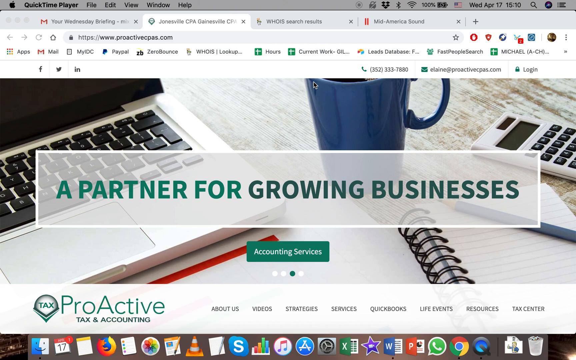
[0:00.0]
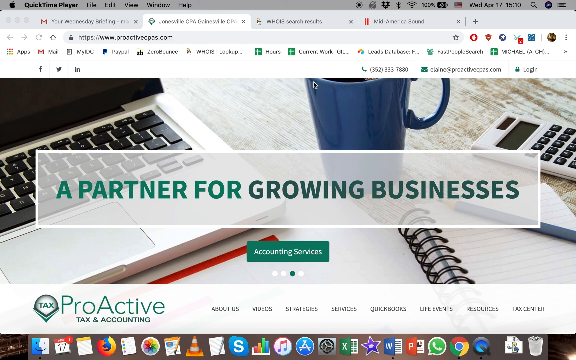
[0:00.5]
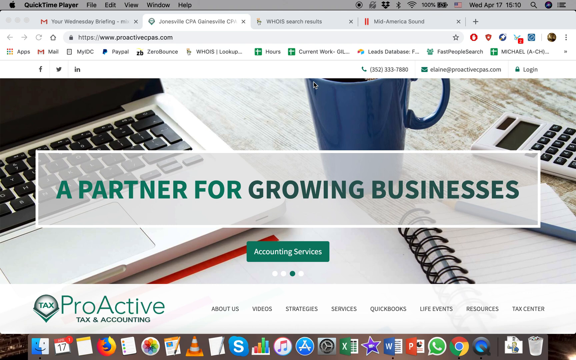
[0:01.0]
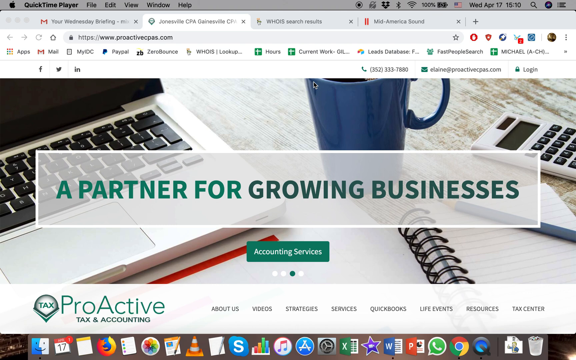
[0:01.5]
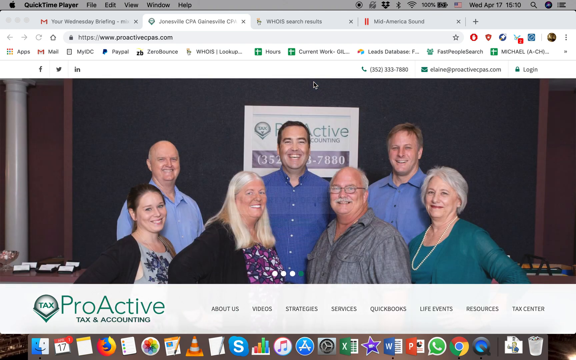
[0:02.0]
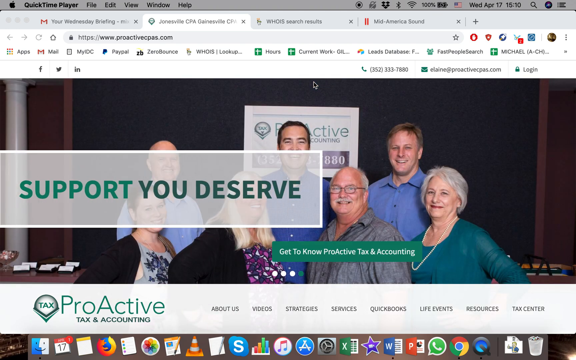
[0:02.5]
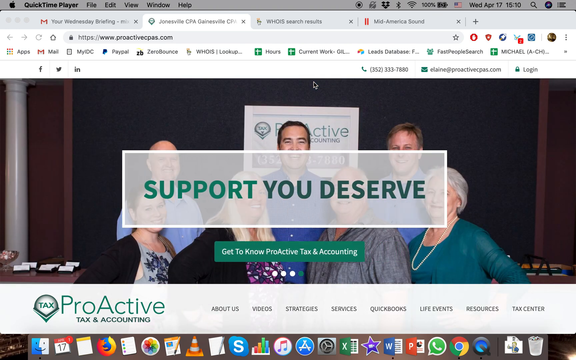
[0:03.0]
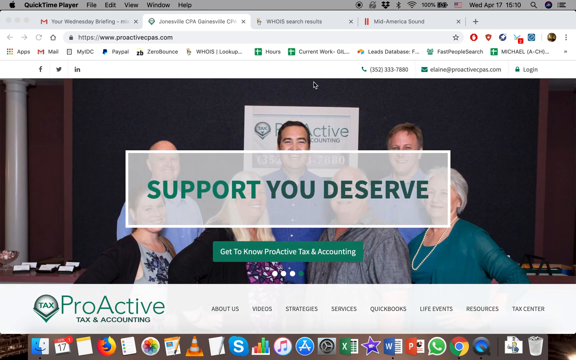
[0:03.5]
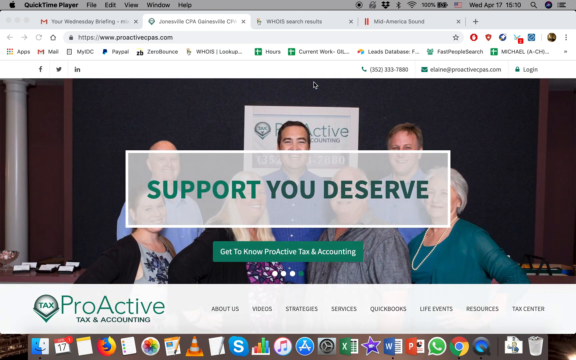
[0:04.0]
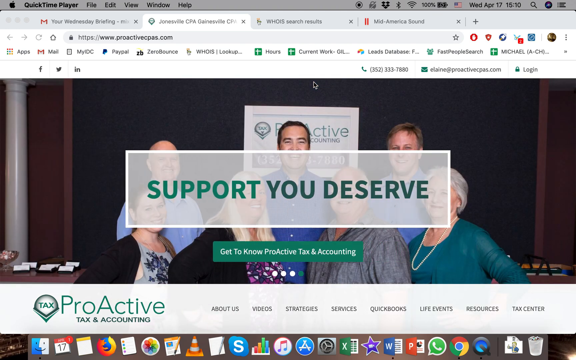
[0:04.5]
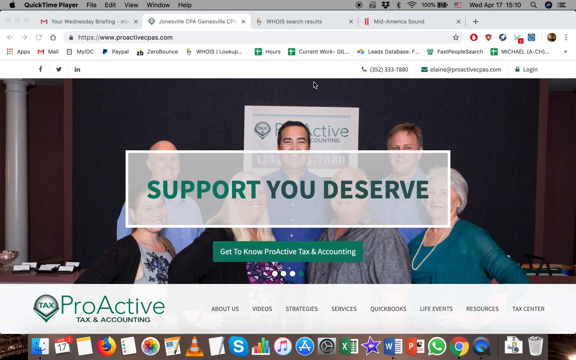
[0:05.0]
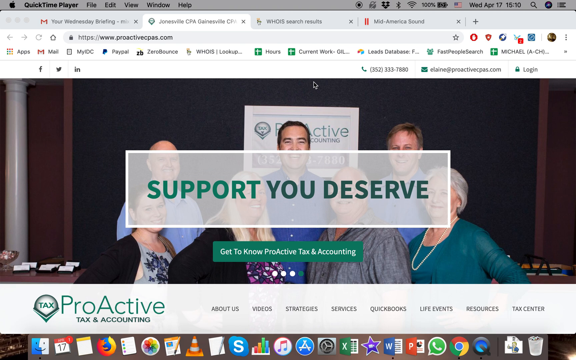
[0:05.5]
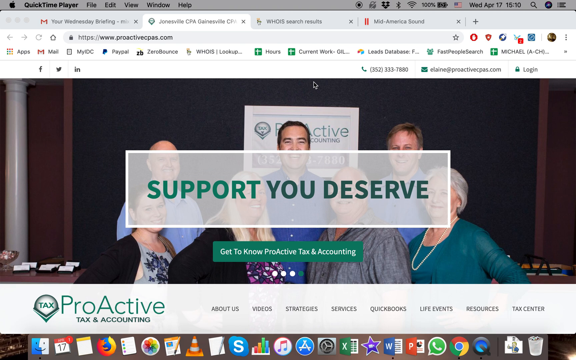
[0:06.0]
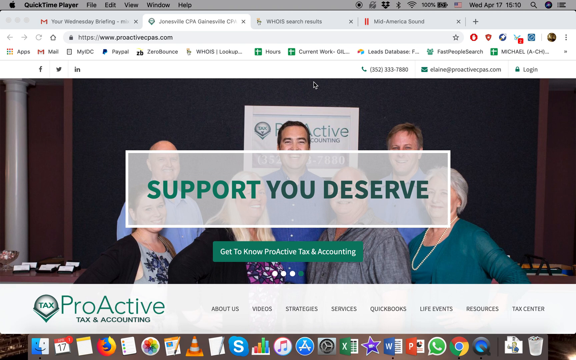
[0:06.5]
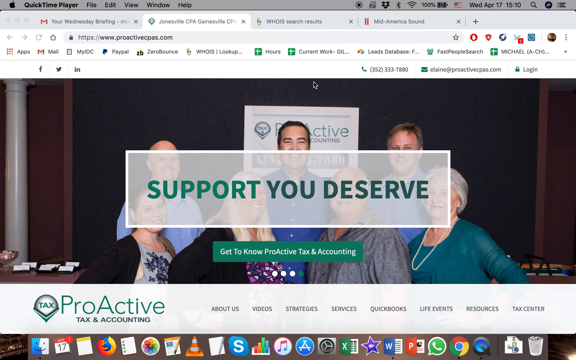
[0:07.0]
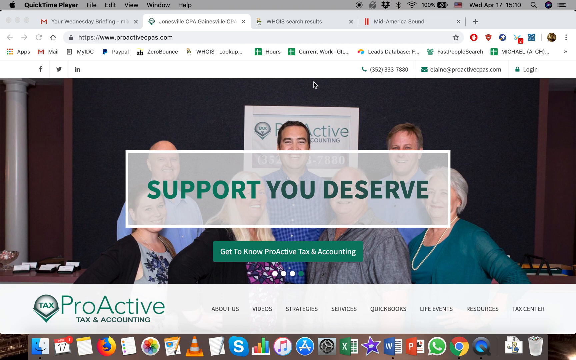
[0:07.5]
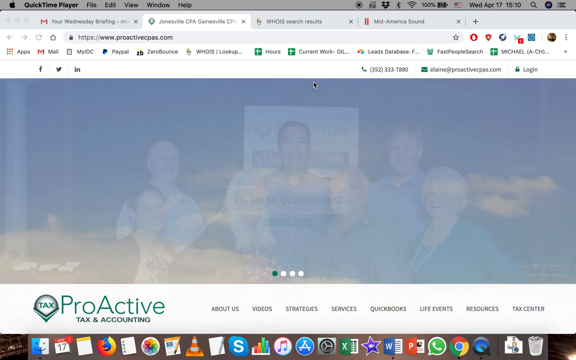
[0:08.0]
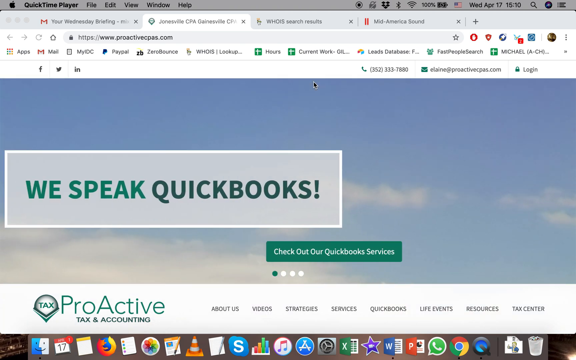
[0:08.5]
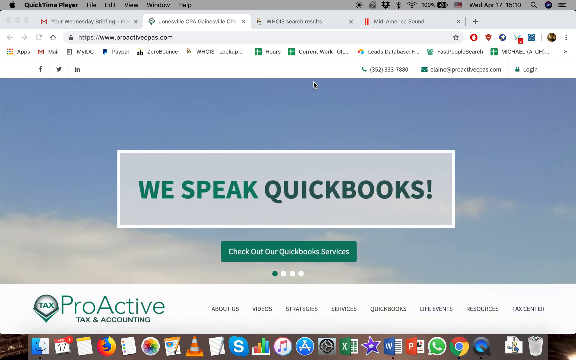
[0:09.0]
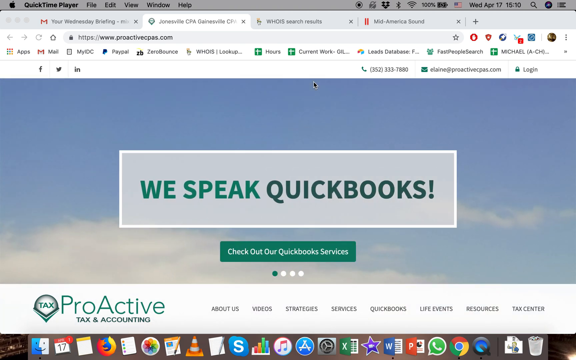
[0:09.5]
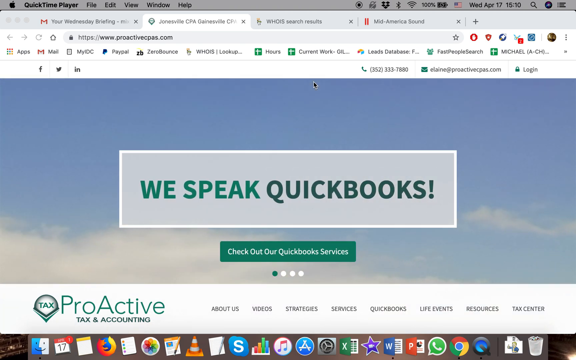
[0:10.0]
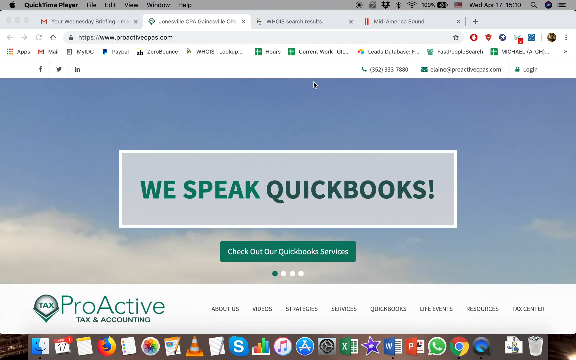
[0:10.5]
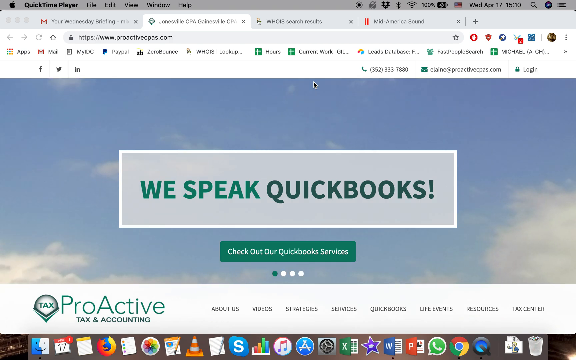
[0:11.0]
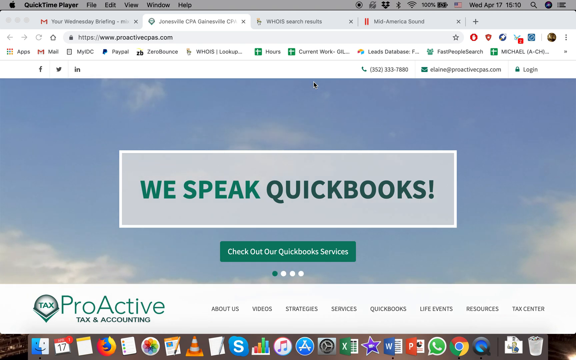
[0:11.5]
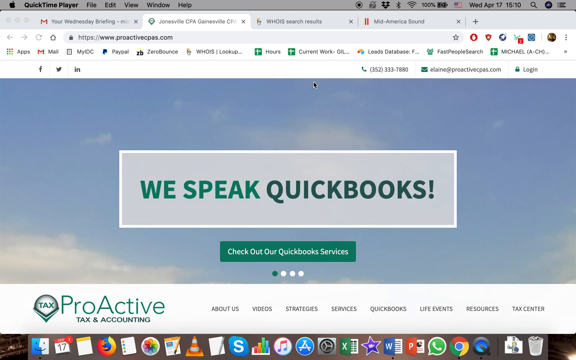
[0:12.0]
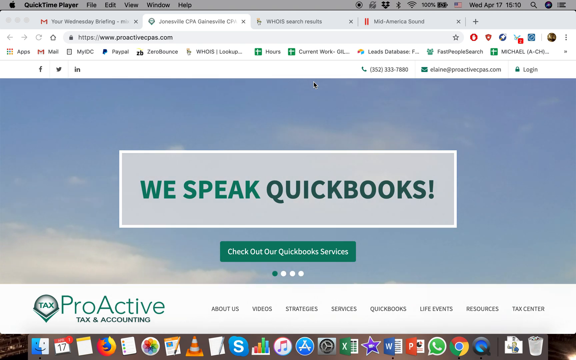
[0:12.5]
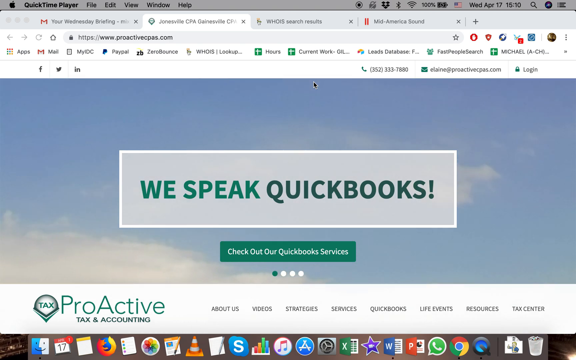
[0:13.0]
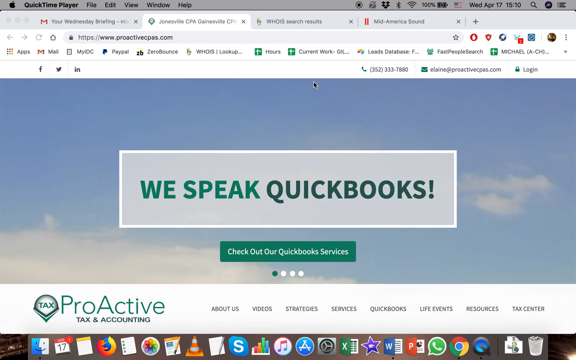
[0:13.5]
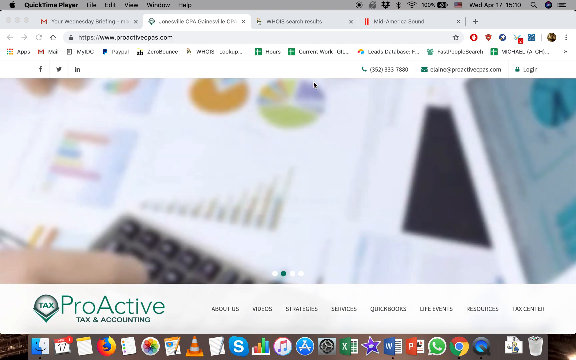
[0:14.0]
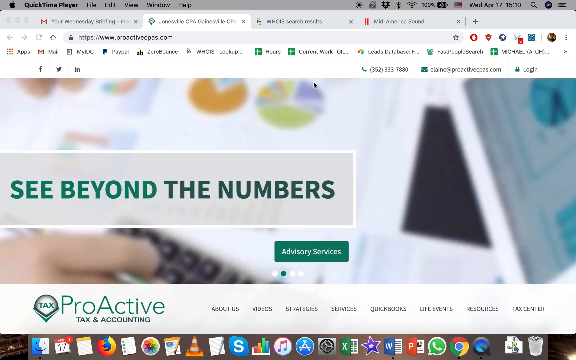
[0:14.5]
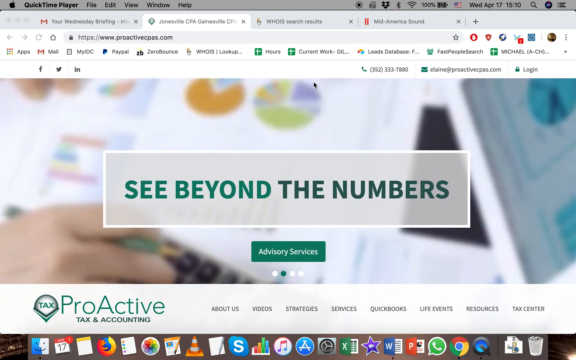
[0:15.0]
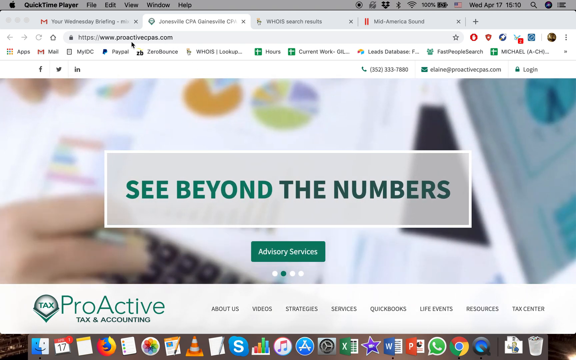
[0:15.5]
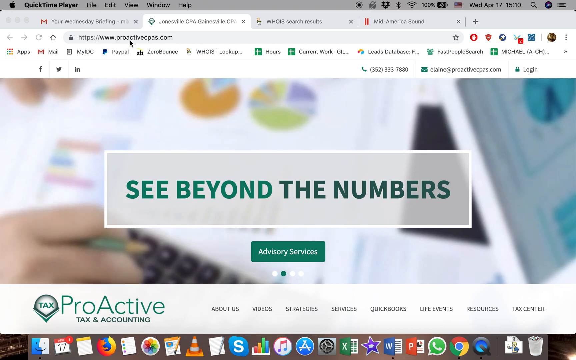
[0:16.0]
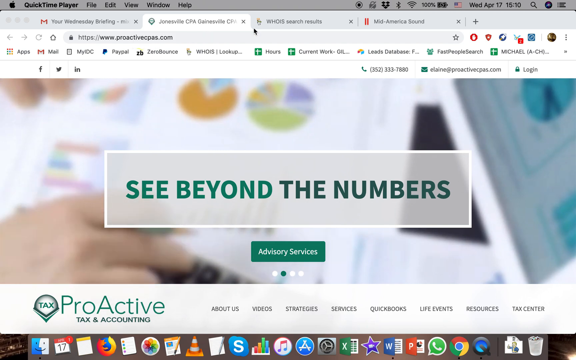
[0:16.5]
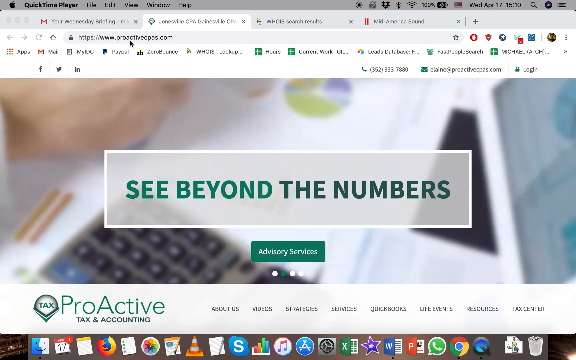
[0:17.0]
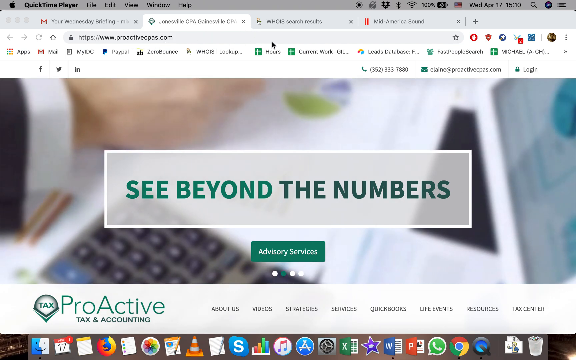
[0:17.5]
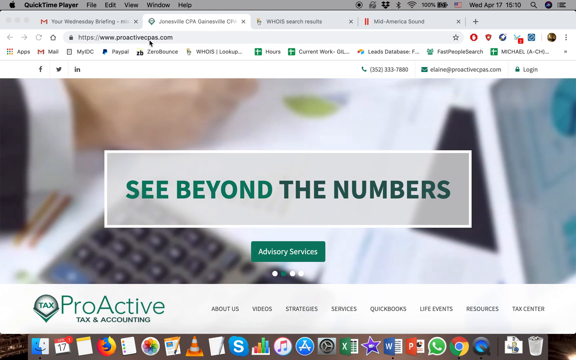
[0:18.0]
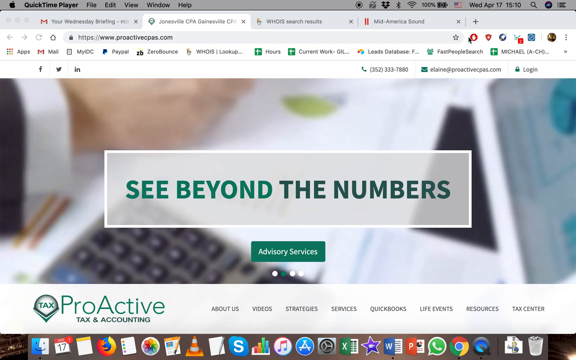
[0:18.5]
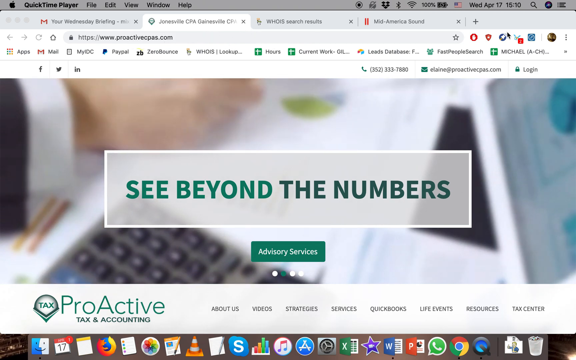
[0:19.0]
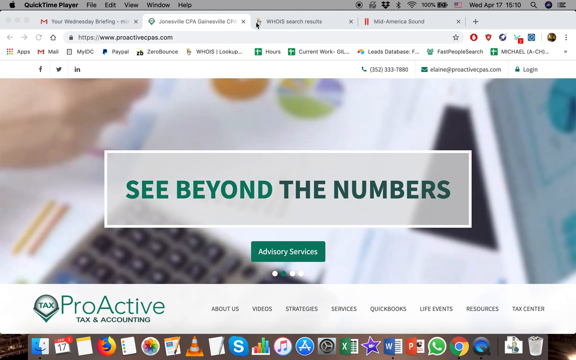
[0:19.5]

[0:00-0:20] A web page is open with the URL www.proactivecpass.com. The main page reads "a partner for growing business." A phone number, an email, and a login are at the top right of the page, and at the top left are Facebook, Twitter, and either Indeed or Instagram logos, hard to say which. At the bottom it reads "proactive tax and accounting," so it is a tax accounting business, and toward the bottom center right are the usual links such as about us, services, resources, and more. The computer appears to be a Mac, with an Apple logo at the top left and a bunch of apps along the bottom. The user stays on this page and does not seem to click on anything for a while.